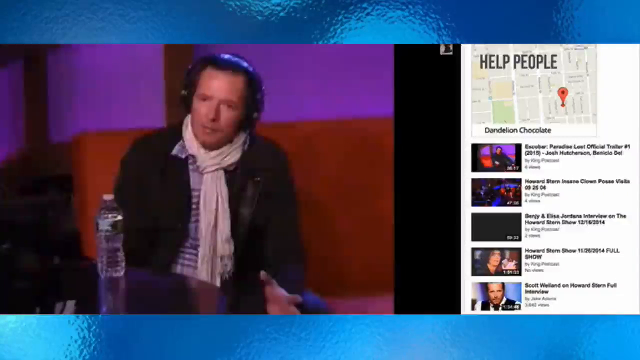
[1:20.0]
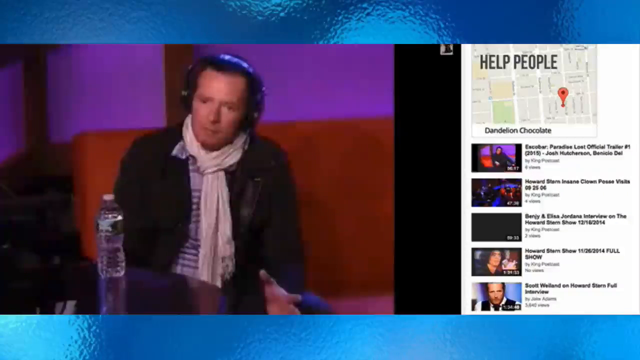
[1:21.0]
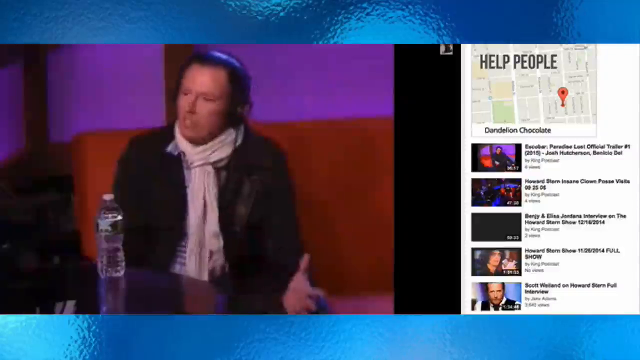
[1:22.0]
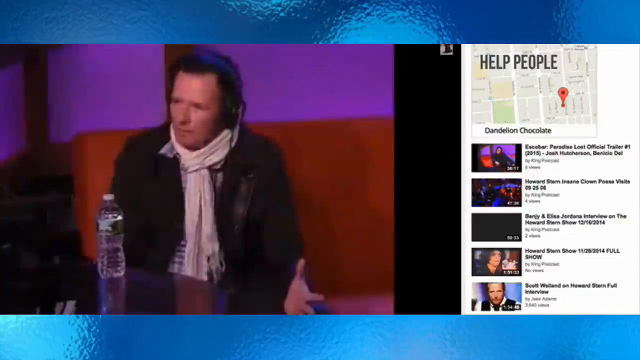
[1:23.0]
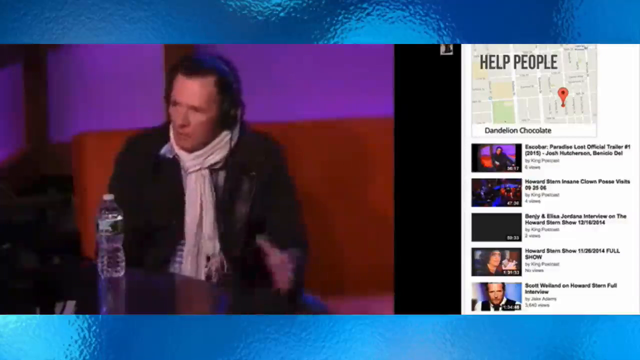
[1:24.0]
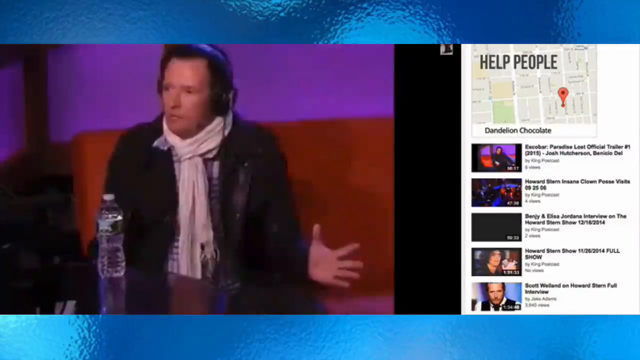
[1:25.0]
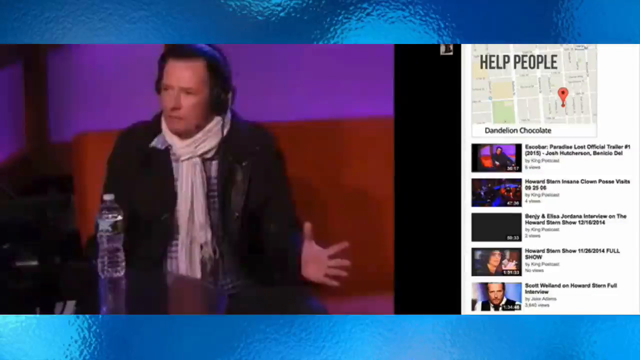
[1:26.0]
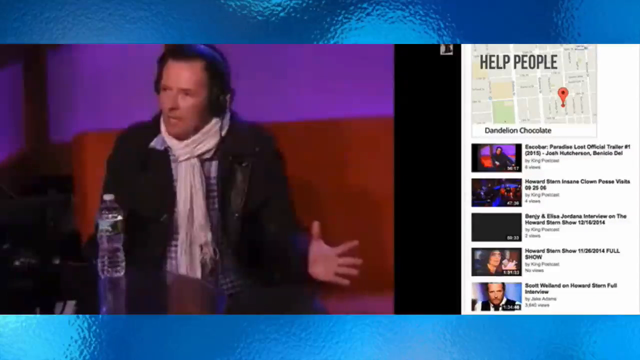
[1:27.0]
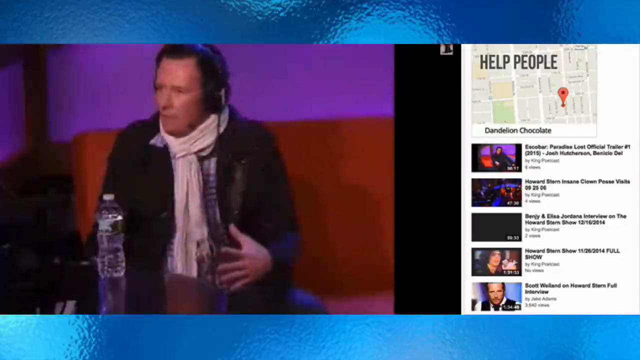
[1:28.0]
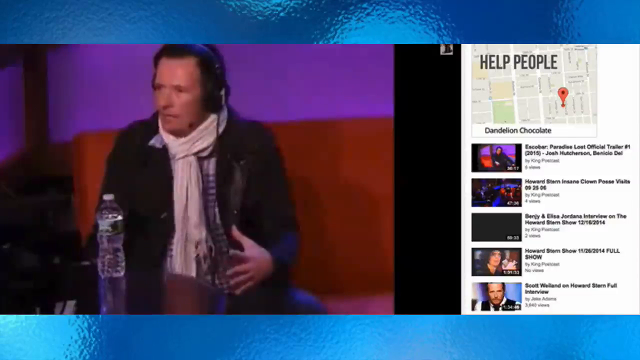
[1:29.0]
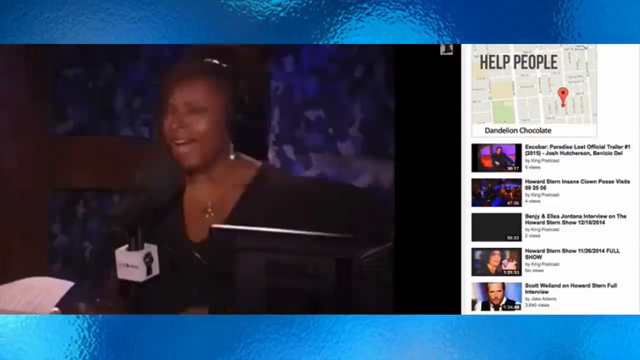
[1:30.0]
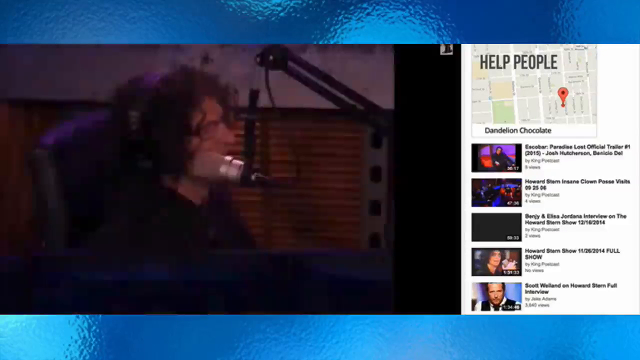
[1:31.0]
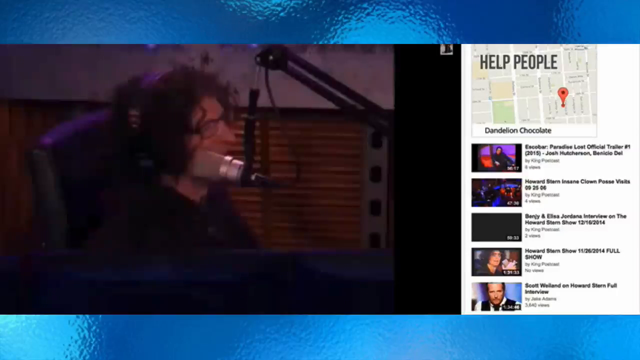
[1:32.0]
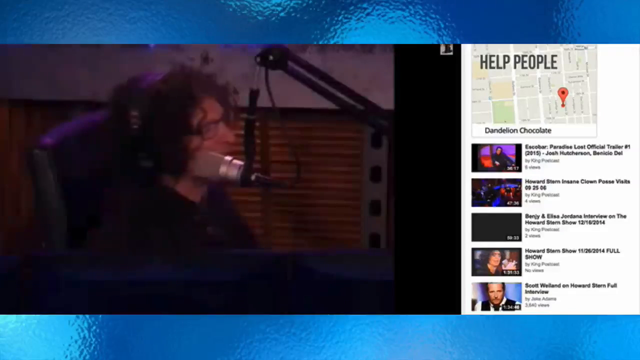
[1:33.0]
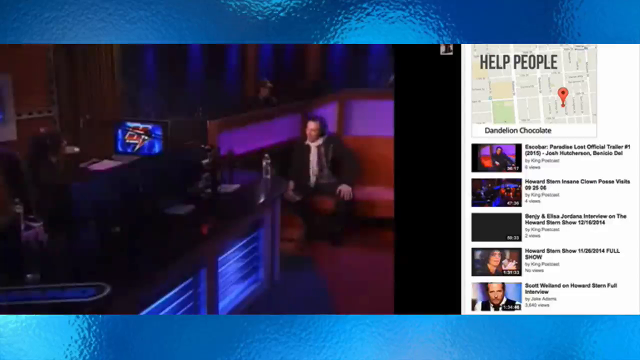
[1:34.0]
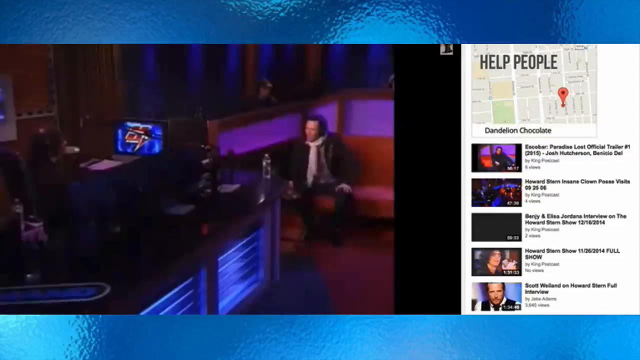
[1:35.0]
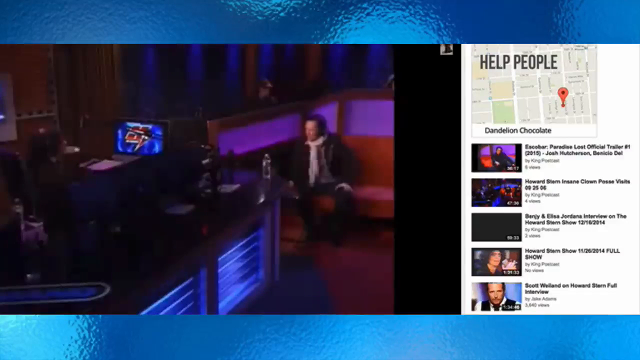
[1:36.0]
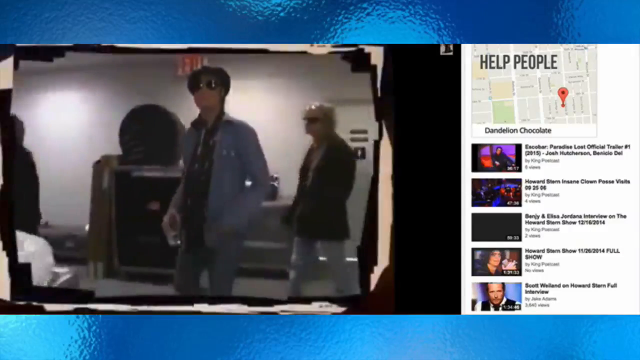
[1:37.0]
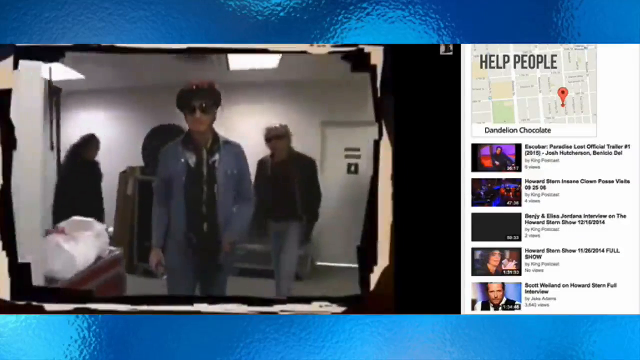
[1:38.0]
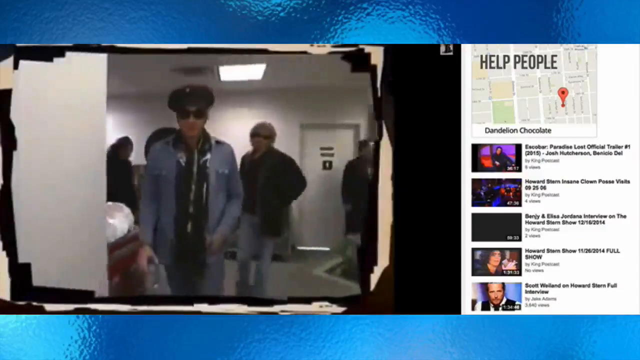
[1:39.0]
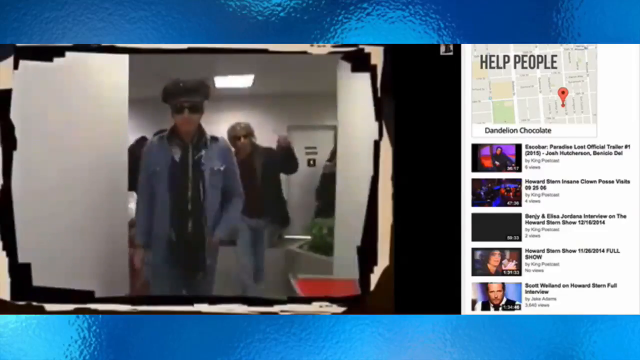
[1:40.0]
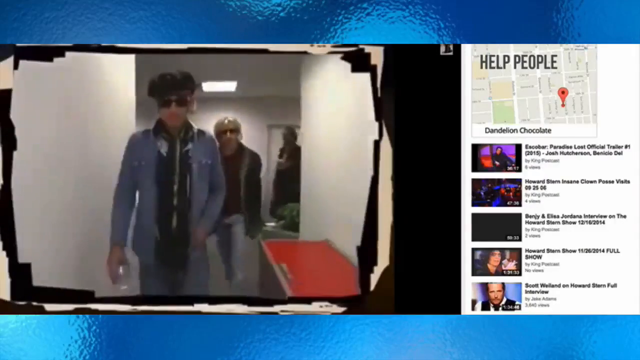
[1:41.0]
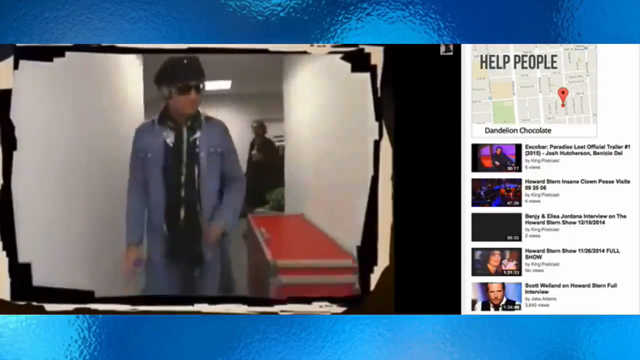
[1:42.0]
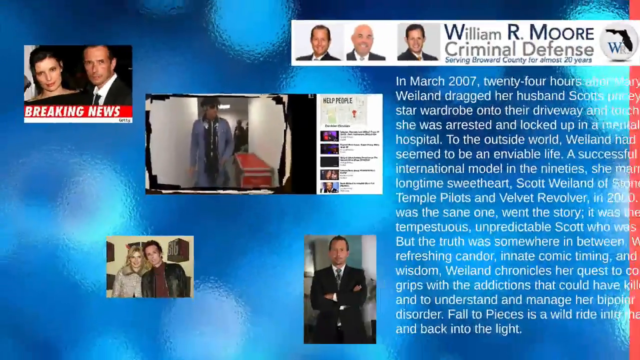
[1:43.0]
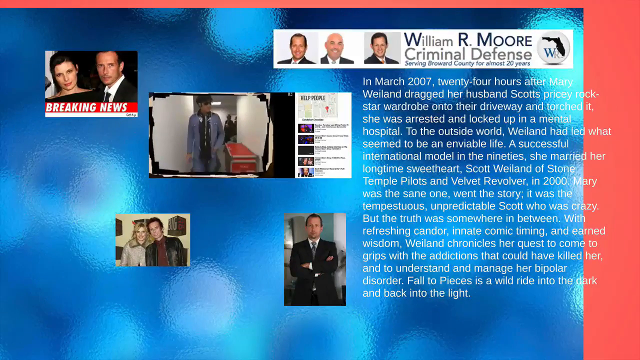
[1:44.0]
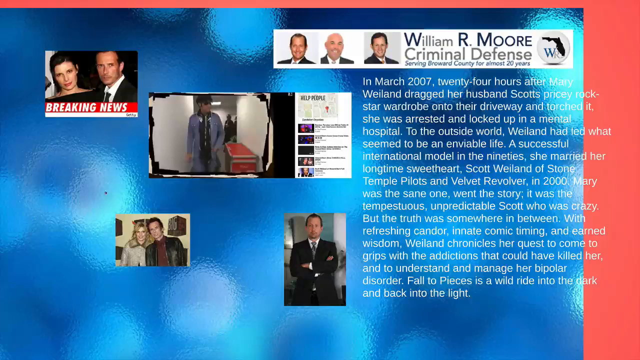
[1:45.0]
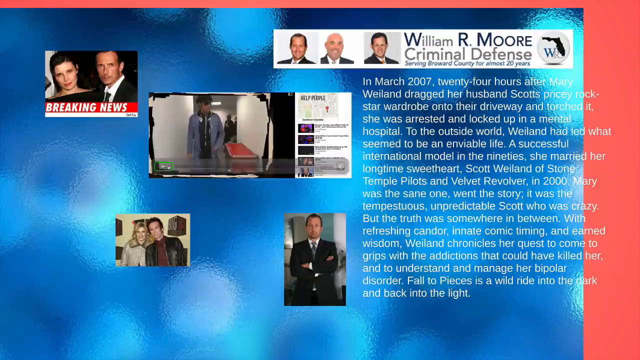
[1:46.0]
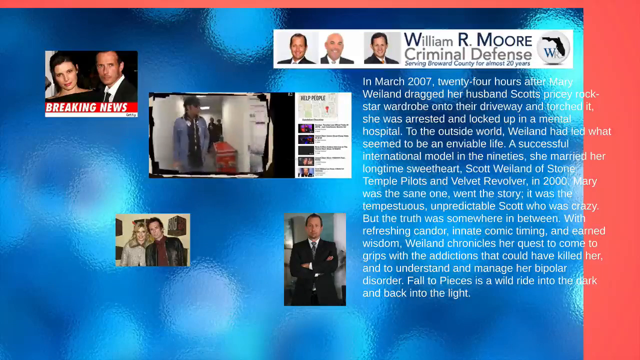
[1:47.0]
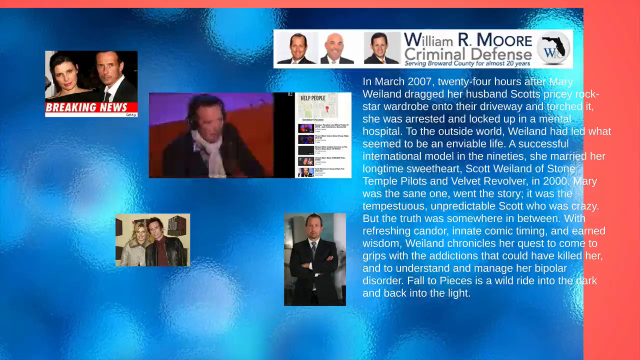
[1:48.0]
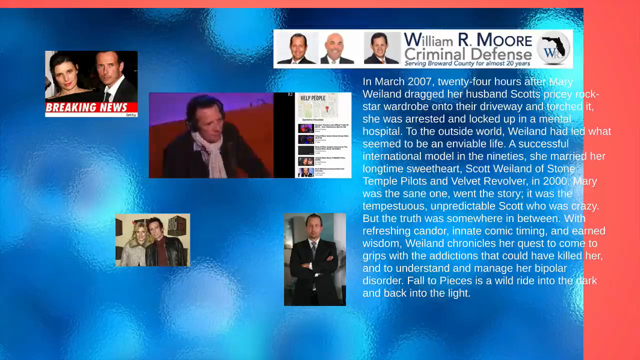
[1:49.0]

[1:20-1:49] On the same screen, a gentleman walks up the street, following another, and they enter the studio. They appear to be preparing to leave, done presenting. The shot zooms in and out on the gentleman and on a man on the other side who looks like a radio presenter and seems to be talking and asking this other man questions. The man wearing headphones with a microphone has a water bottle in front of him as he talks. A female presenter on the other side nods her head while laughing. More people enter the studio, apparently two gentlemen wearing sunglasses, in what looks like footage from an old clip, as they walk into a recording studio.